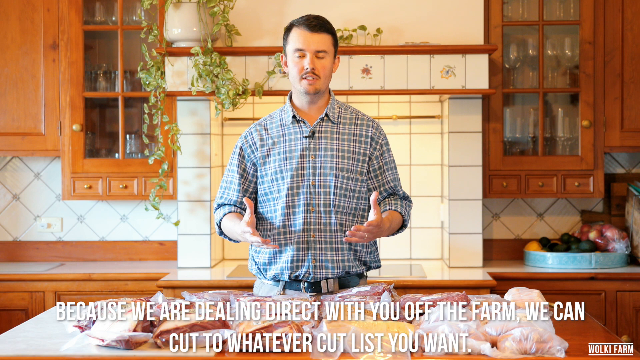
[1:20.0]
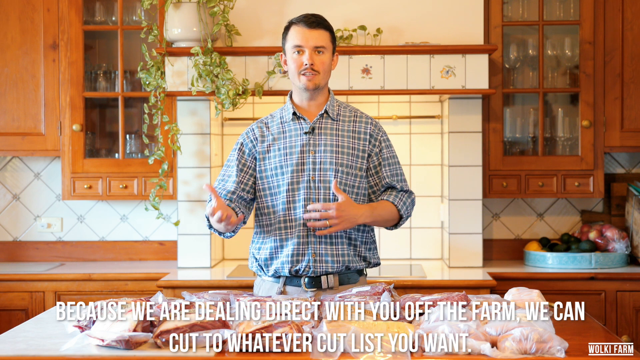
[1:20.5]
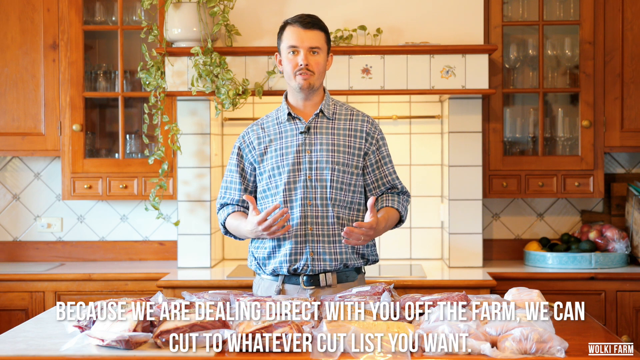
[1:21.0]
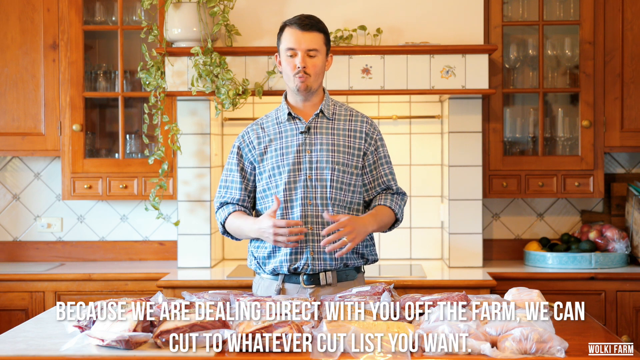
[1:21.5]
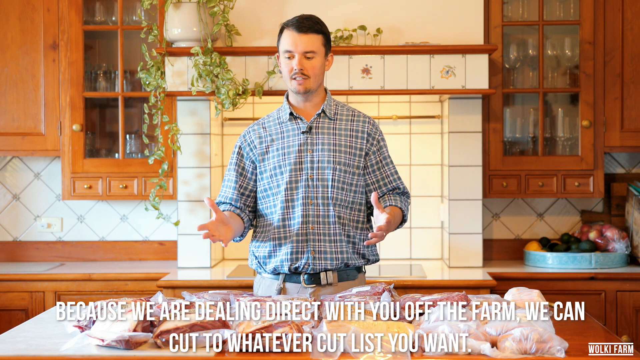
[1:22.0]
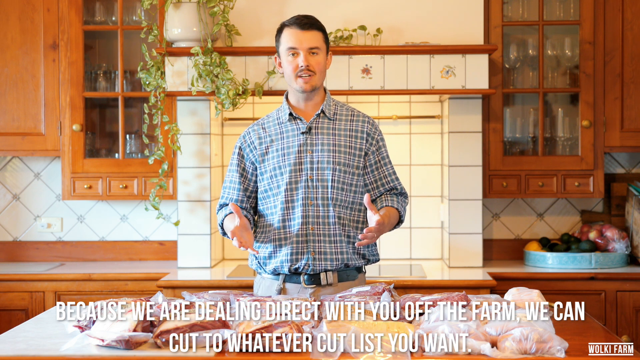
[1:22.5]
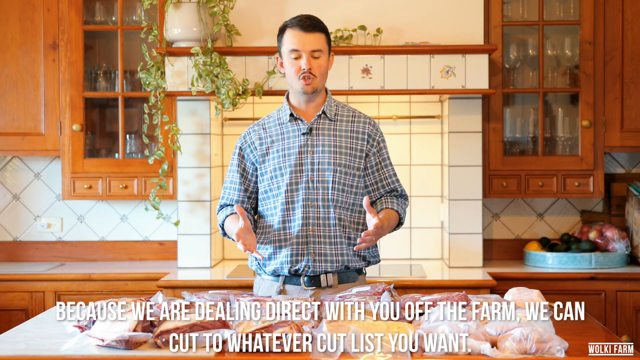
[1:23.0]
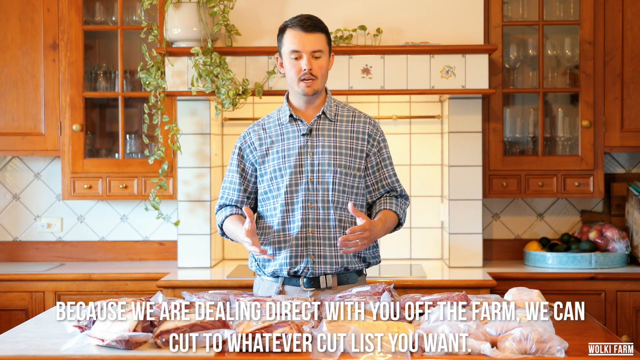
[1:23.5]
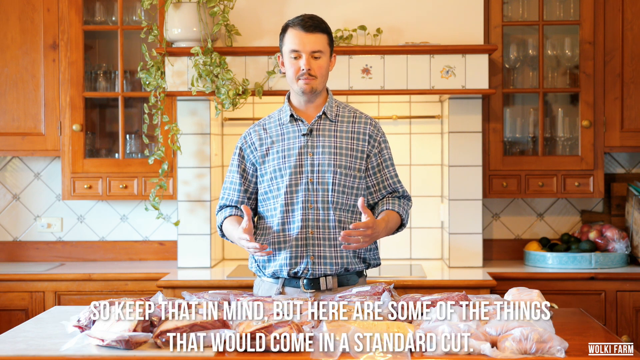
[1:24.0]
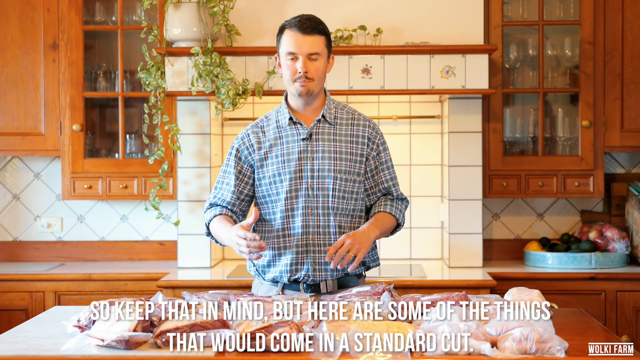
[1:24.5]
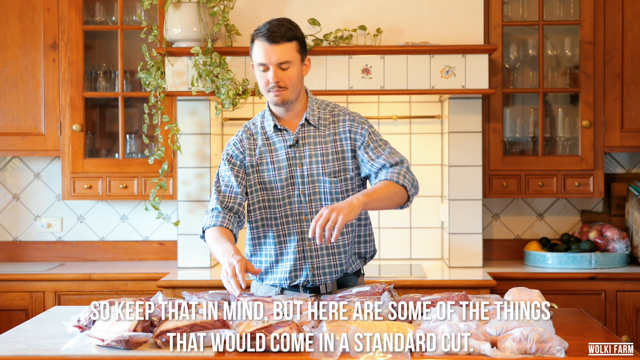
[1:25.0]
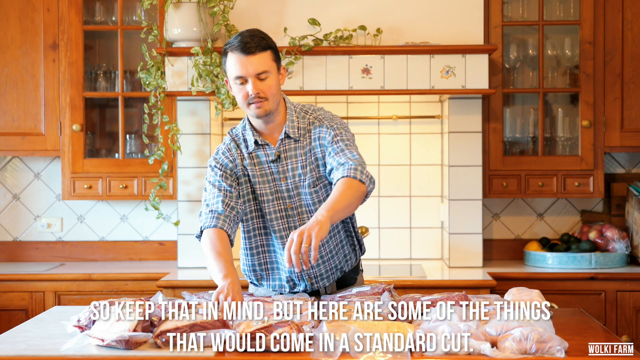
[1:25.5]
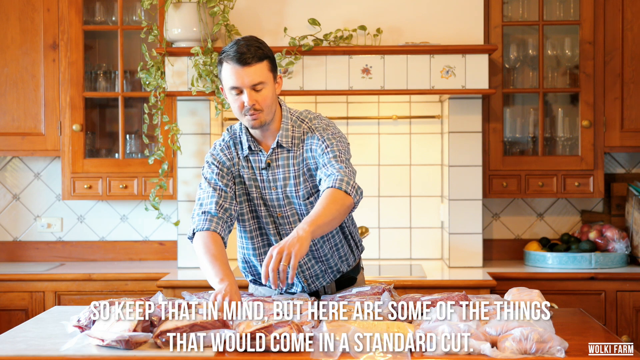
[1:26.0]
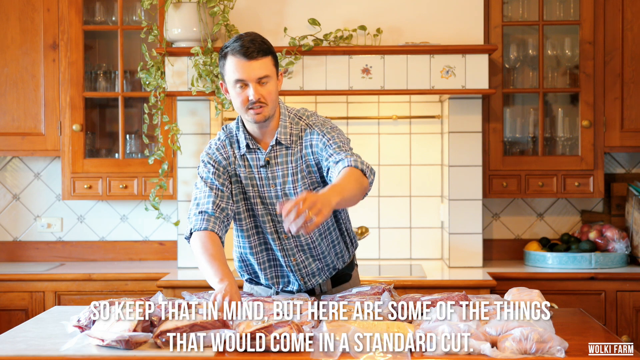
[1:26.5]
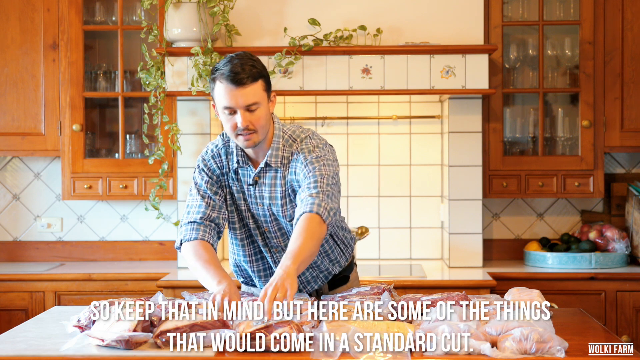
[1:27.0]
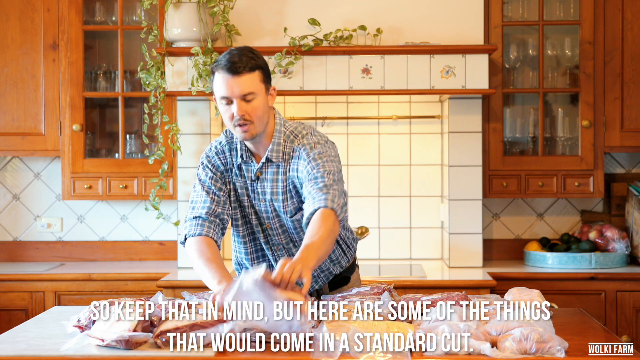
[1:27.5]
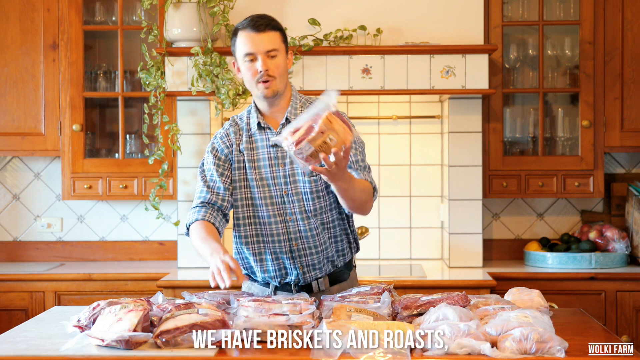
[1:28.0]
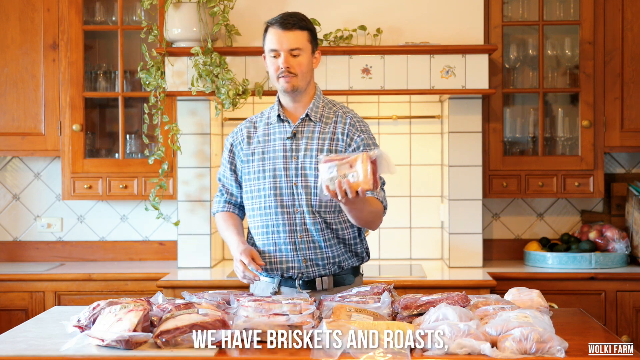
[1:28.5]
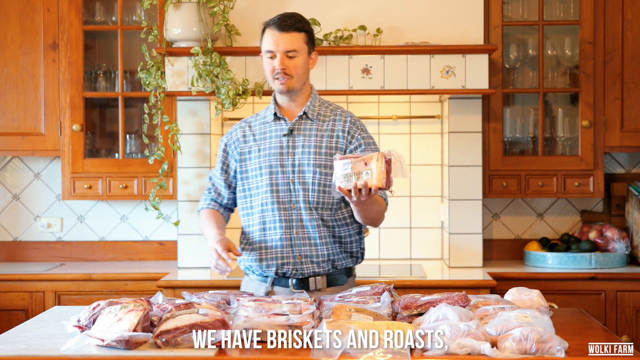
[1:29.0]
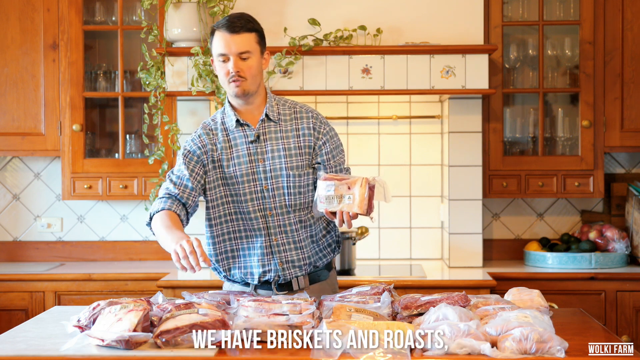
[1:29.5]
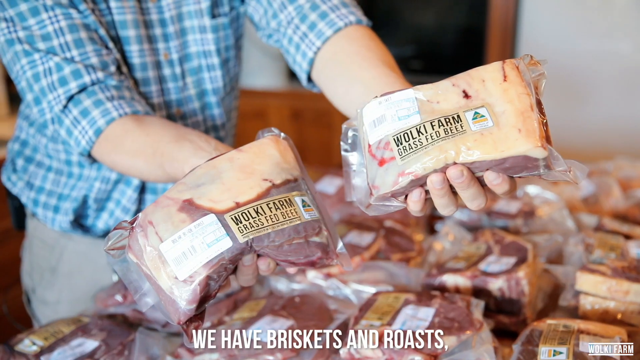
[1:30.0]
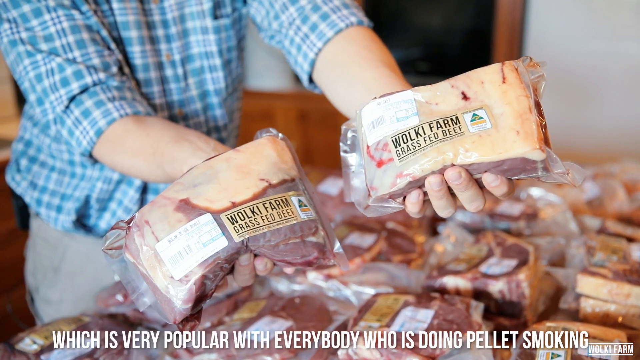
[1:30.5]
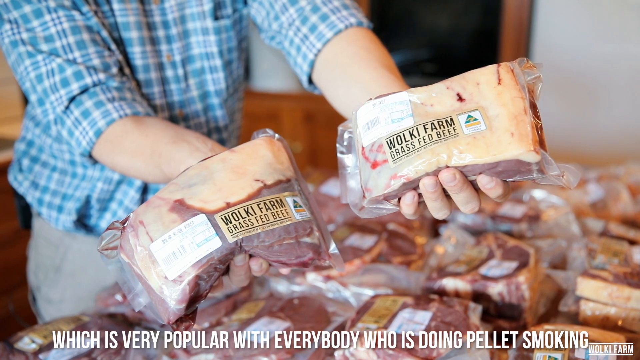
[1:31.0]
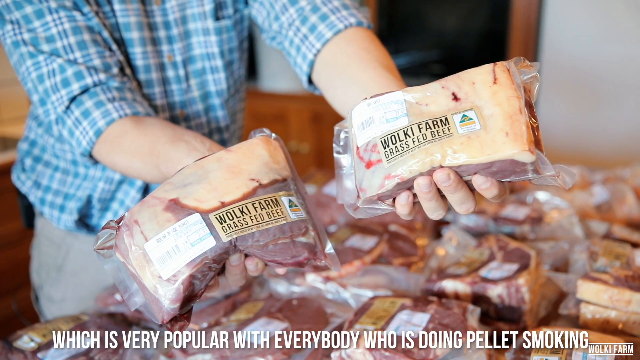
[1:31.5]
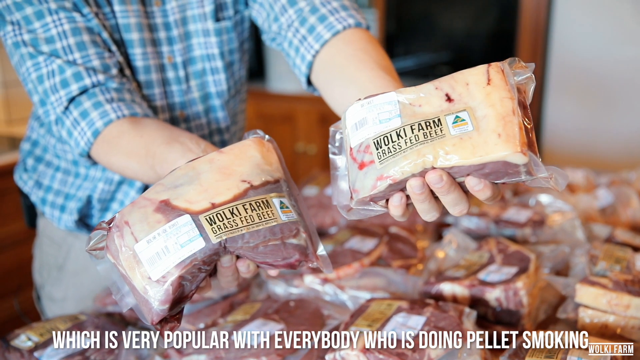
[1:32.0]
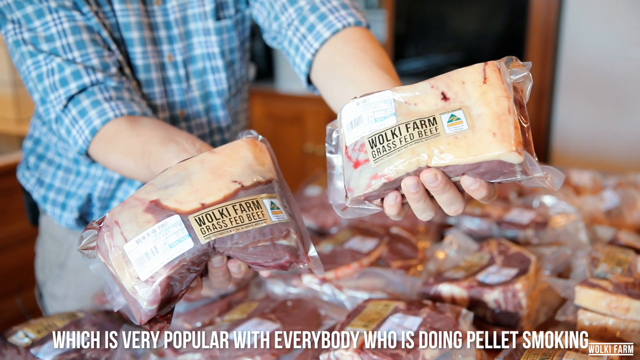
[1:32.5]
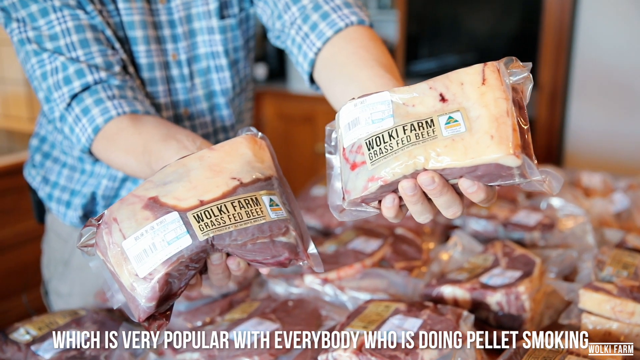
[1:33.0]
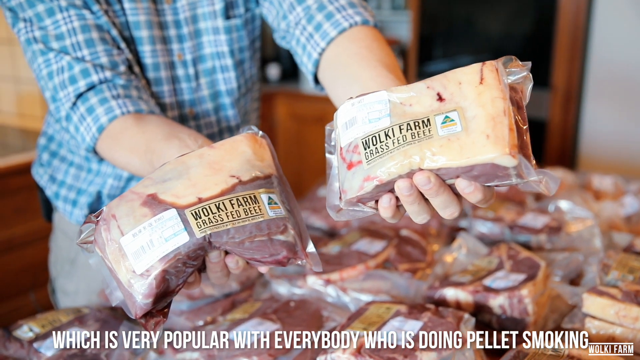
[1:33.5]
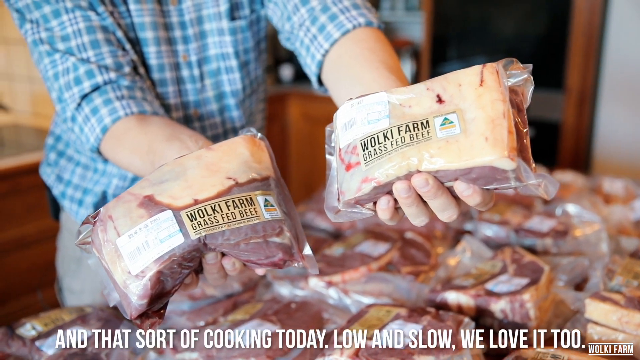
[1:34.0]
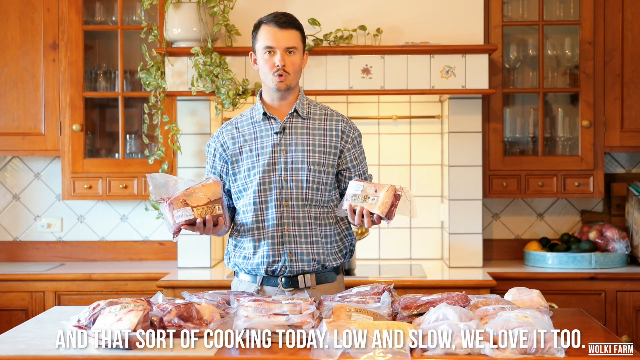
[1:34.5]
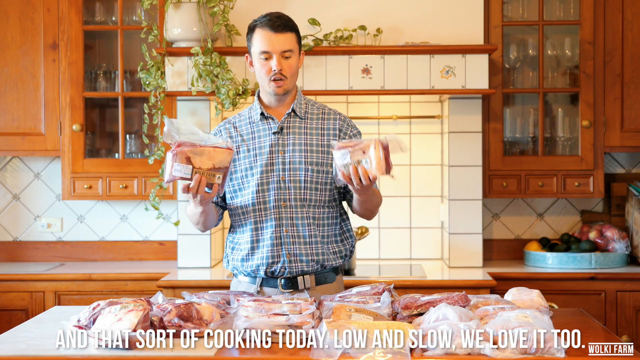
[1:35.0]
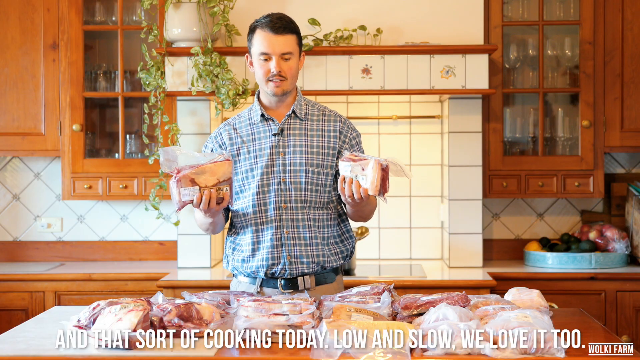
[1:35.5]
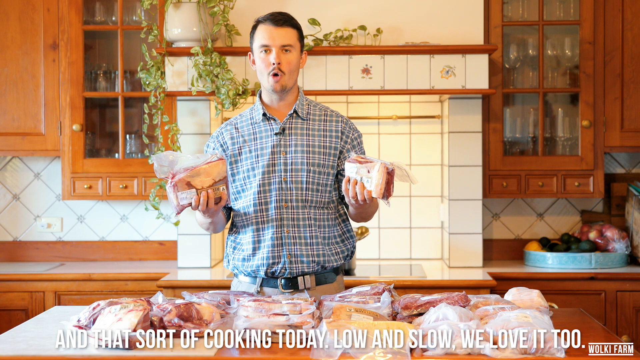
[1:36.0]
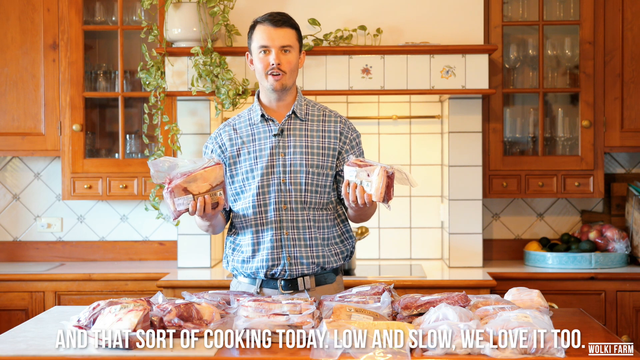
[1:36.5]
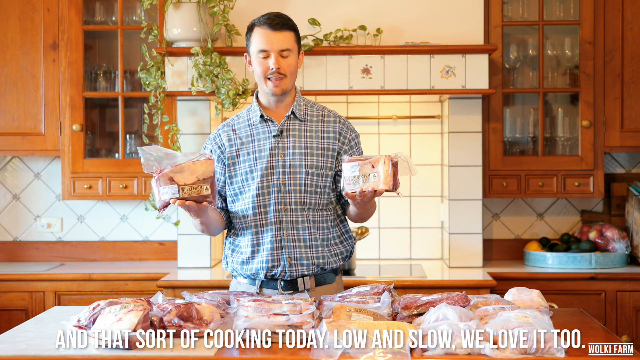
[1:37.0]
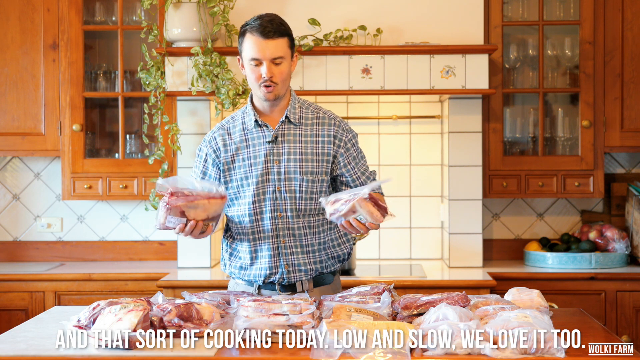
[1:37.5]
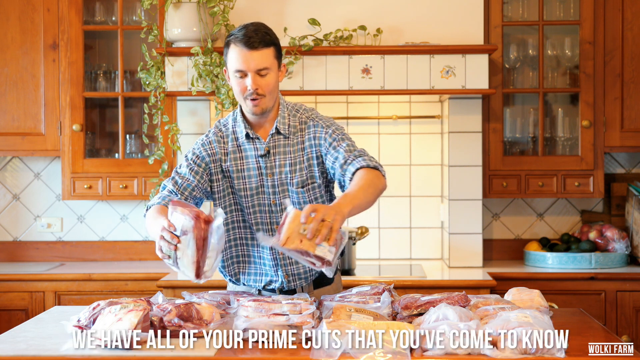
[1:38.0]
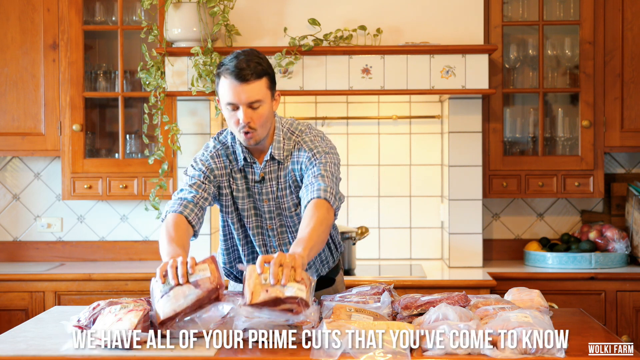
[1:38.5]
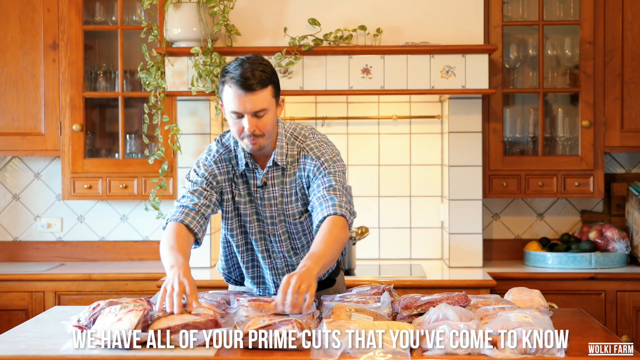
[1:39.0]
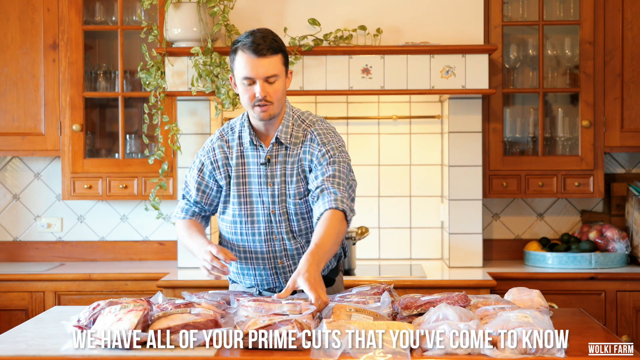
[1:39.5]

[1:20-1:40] The caption continues, "direct with you off the farm we can cut to whatever cut list you want so keep that in mind but here are some of the things that will come in a standard cut". Jacob picks up a kind of jointed beef with his left hand and then holds a jointed beef in each hand, showing them to the camera. The caption reads "we have briskets and roasts, which is very popular with everybody who is doing pellet smoking and that sort of cooking today, low and slow, we love it too. We have all of your prime cuts that you've come to know." As that last part appears, he puts both joints back on the table. The joints look high quality; one looks fattier than the other, and they are both around the same size.